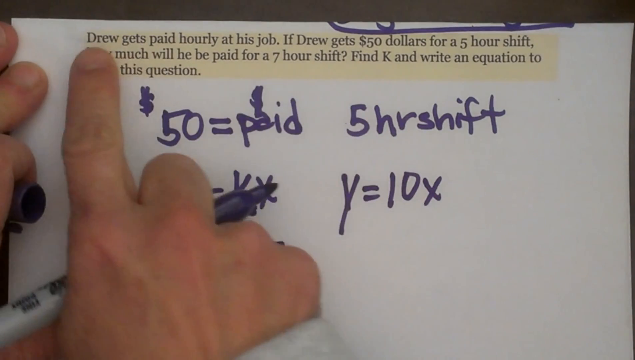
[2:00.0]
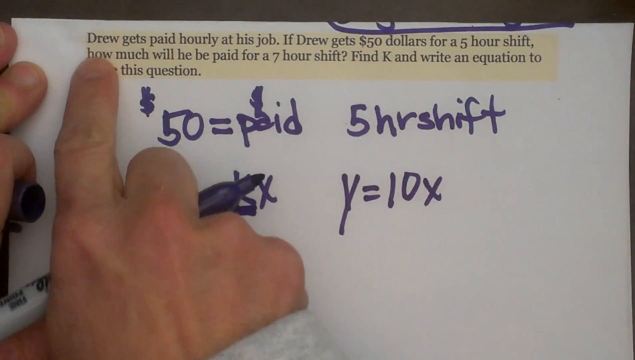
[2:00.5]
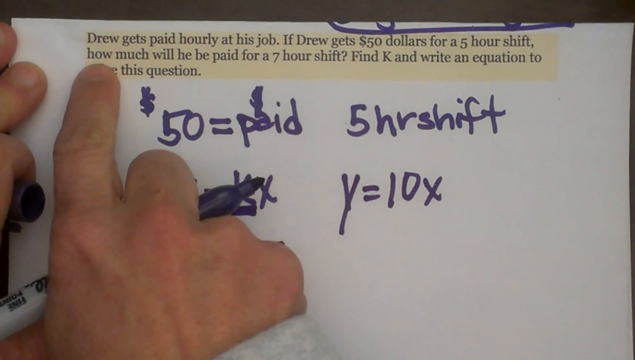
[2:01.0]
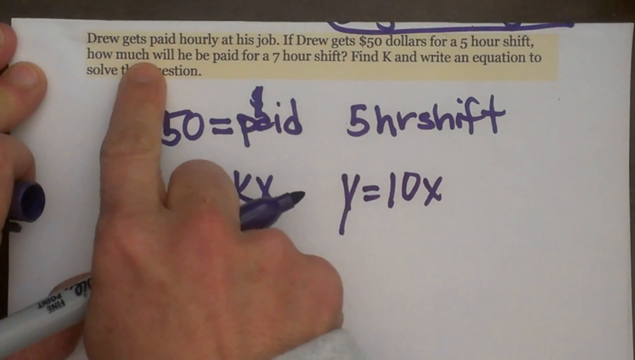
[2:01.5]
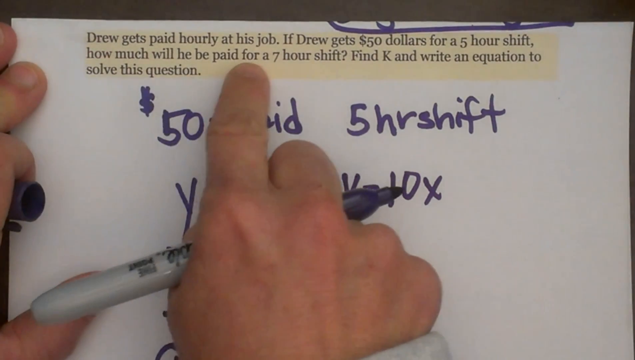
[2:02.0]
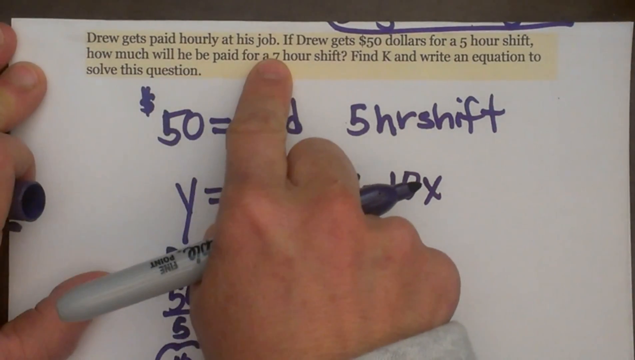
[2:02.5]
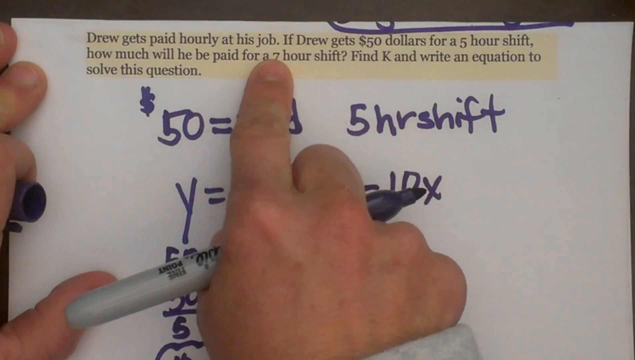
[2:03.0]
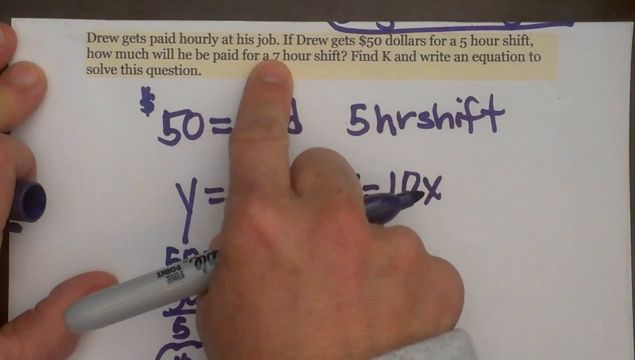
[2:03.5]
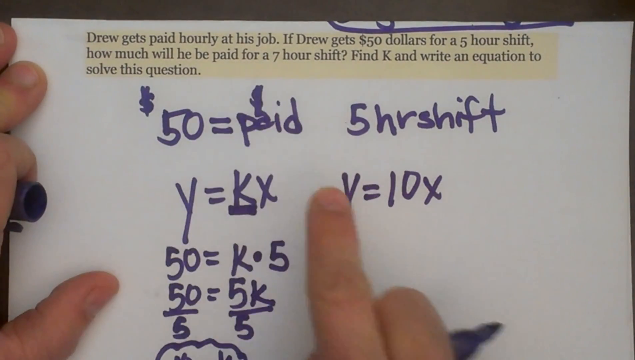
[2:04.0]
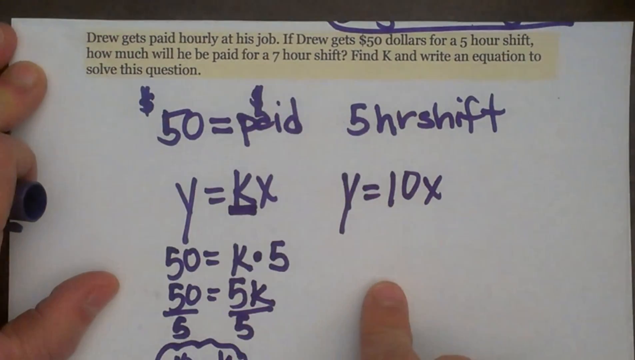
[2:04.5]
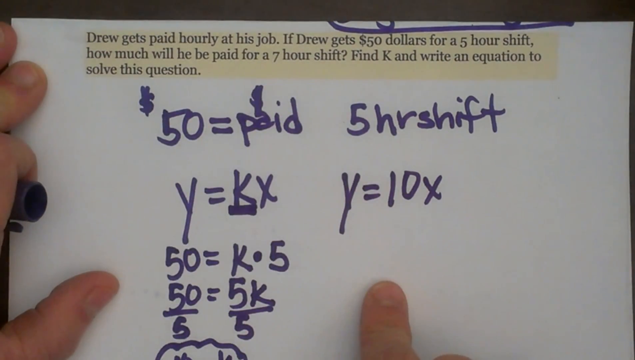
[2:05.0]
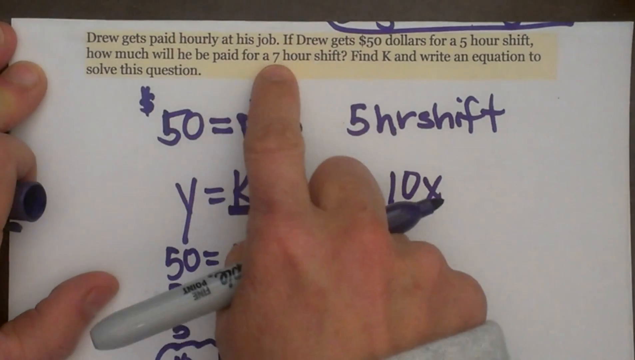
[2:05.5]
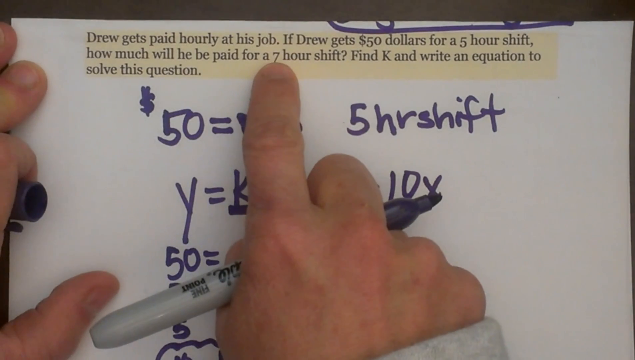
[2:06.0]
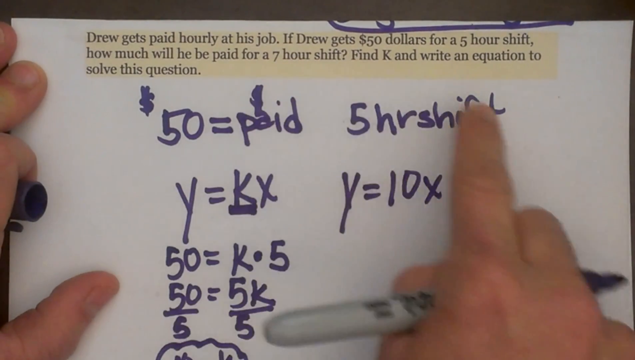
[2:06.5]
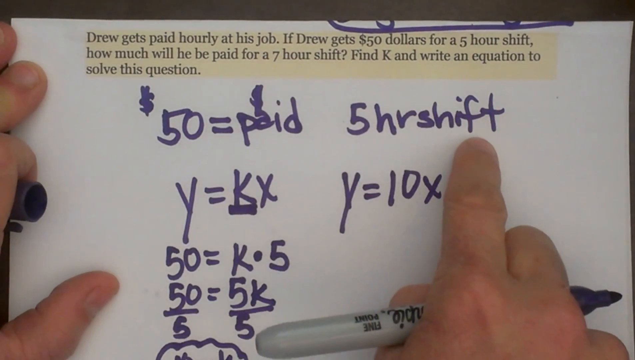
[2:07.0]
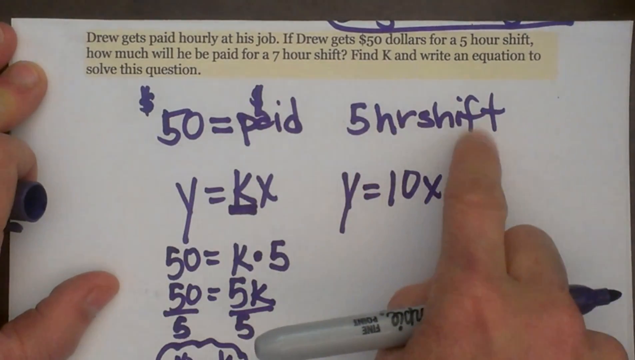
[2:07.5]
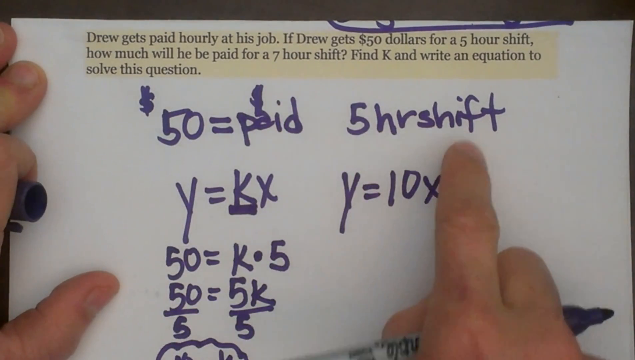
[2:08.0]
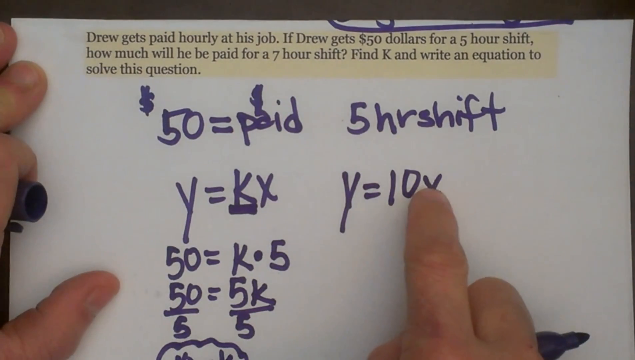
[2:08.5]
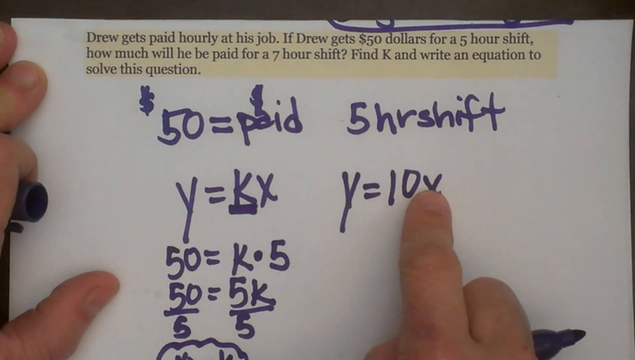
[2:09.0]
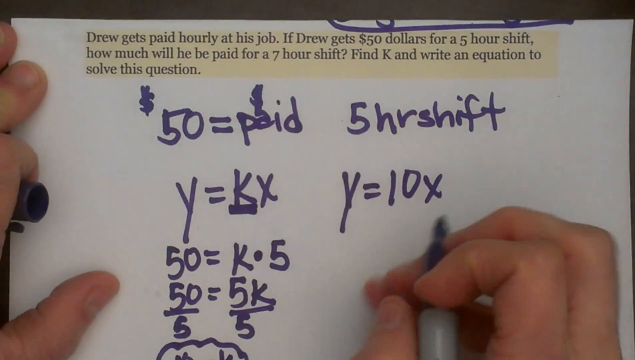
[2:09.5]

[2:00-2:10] A person runs the right index finger along a highlighted paragraph, not touching every word but hitting key points such as "seven", "shift" and the letter x, and also underlining "how much" with the finger. The person then starts to write with the Sharpie marker in the right hand, which was held the entire time the finger was underlining words. The left hand stays still on the piece of paper, holding the cap of the Sharpie in the left index finger.